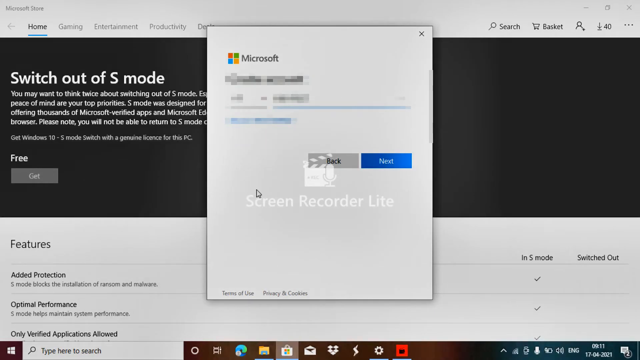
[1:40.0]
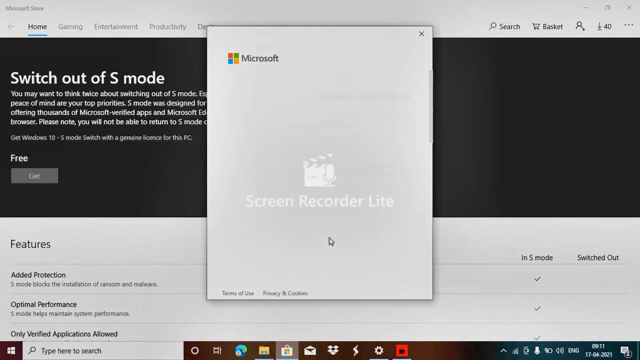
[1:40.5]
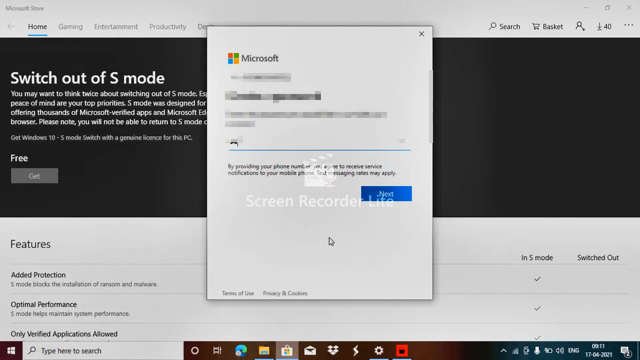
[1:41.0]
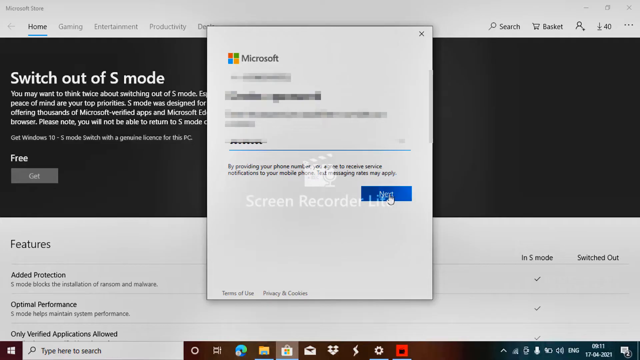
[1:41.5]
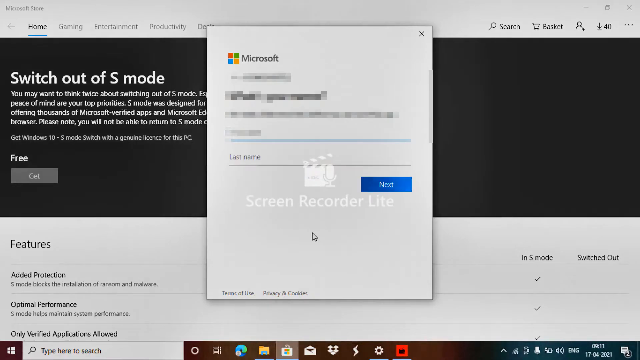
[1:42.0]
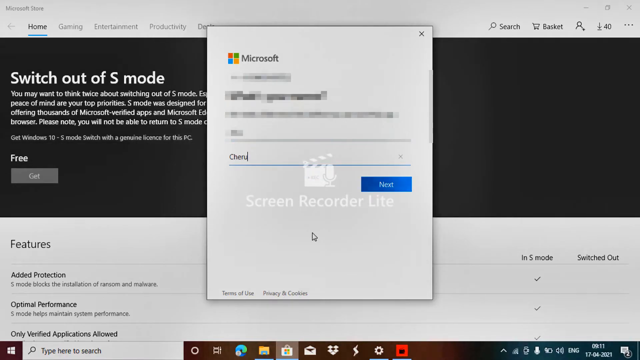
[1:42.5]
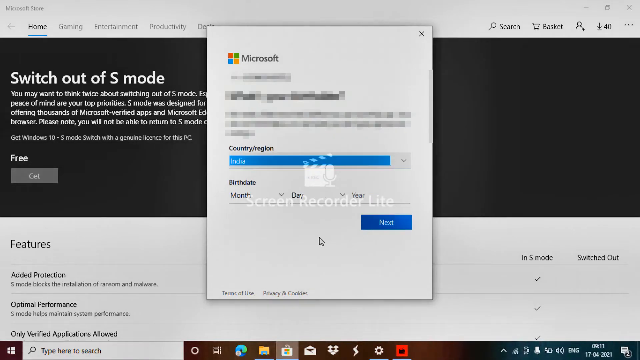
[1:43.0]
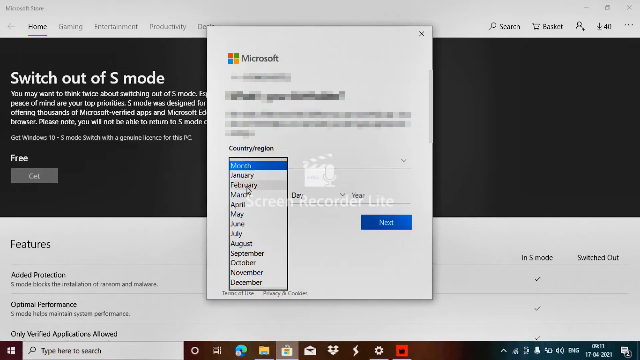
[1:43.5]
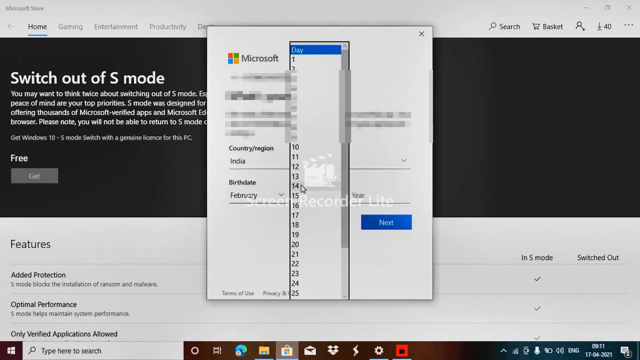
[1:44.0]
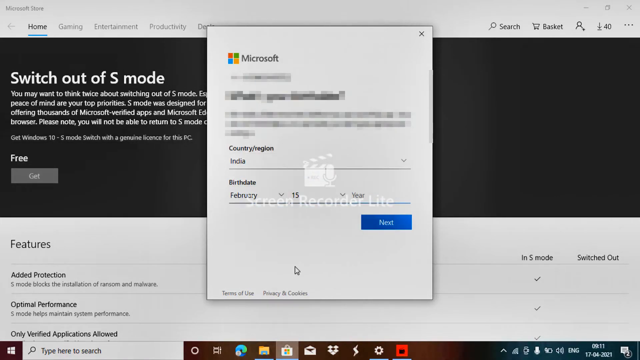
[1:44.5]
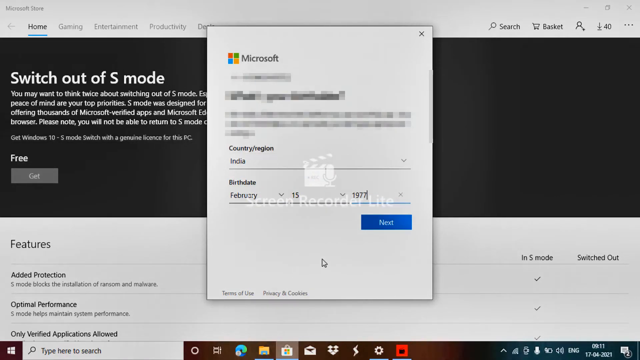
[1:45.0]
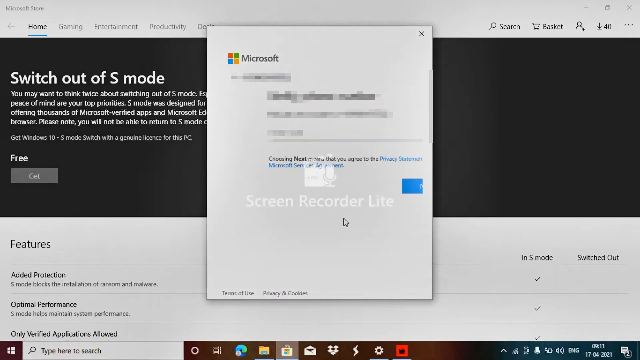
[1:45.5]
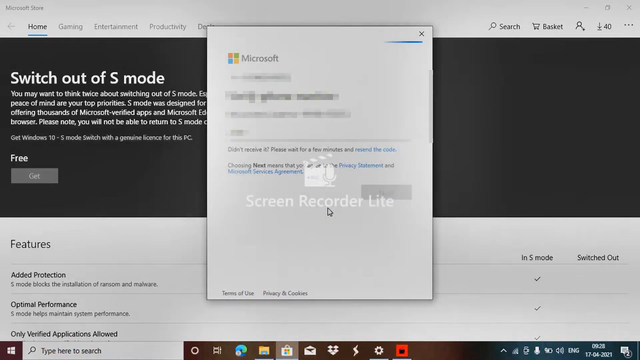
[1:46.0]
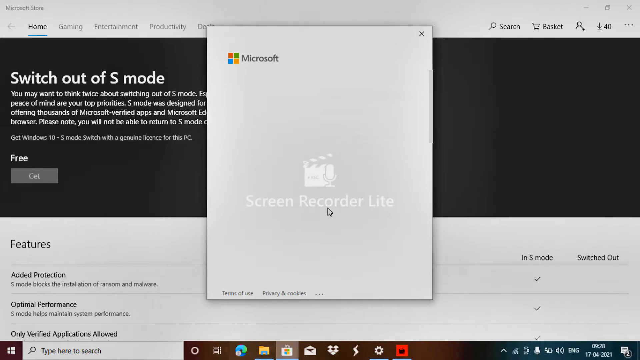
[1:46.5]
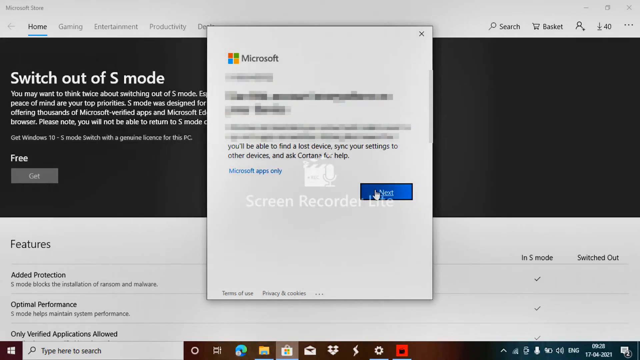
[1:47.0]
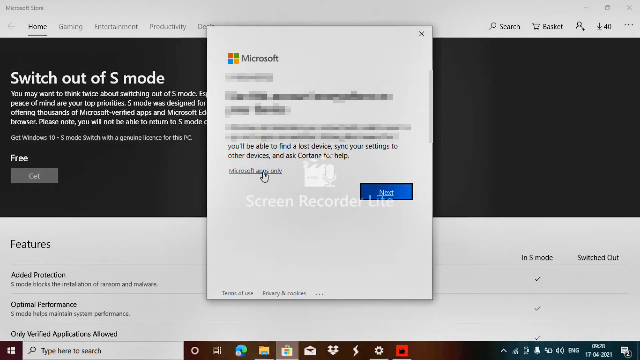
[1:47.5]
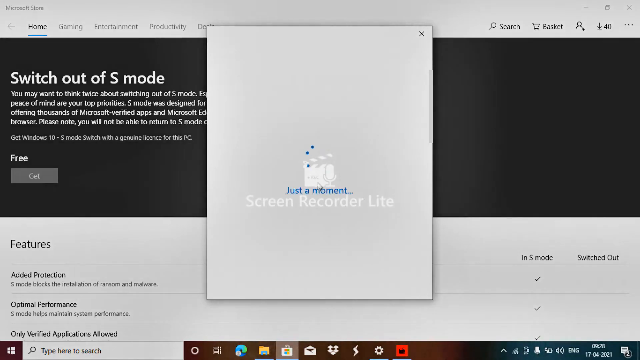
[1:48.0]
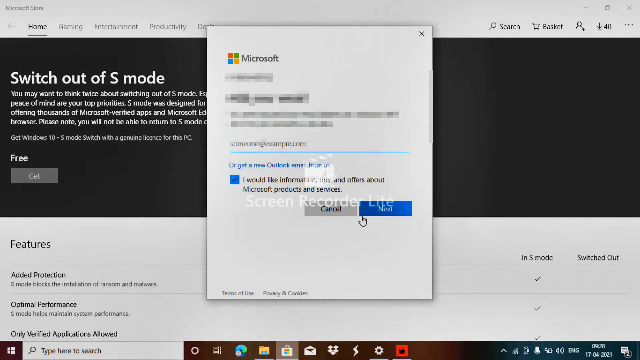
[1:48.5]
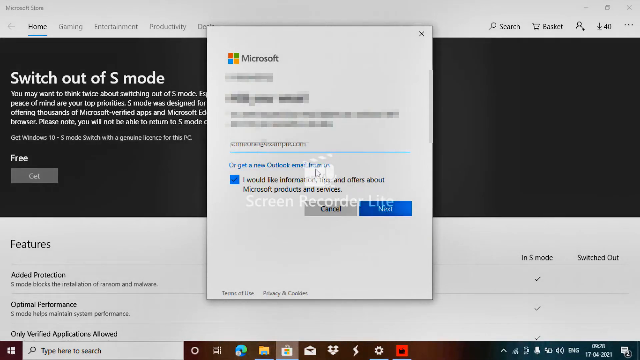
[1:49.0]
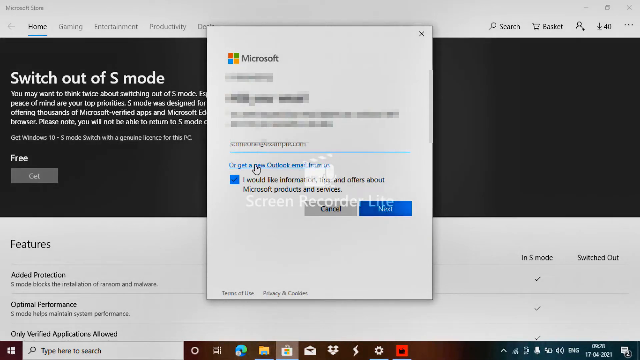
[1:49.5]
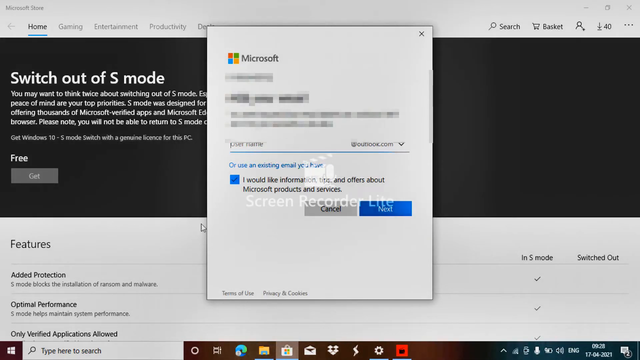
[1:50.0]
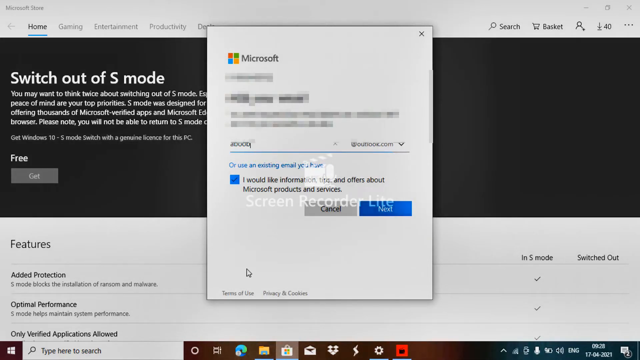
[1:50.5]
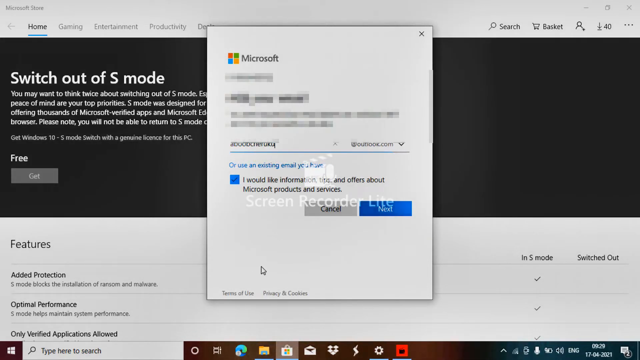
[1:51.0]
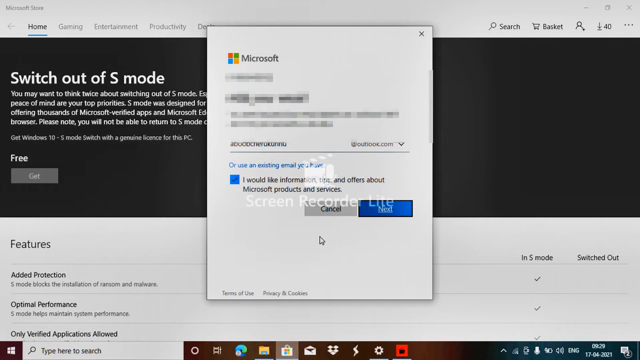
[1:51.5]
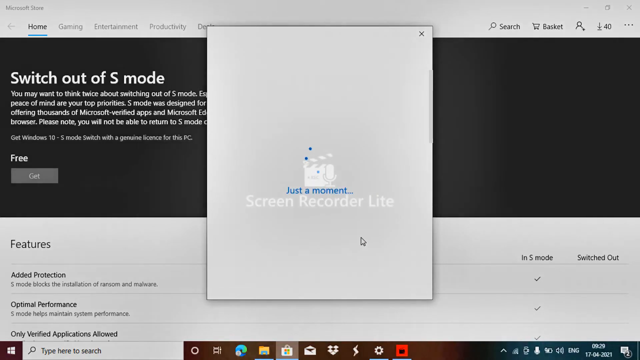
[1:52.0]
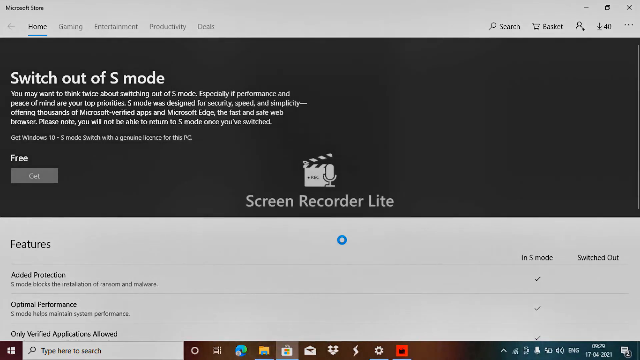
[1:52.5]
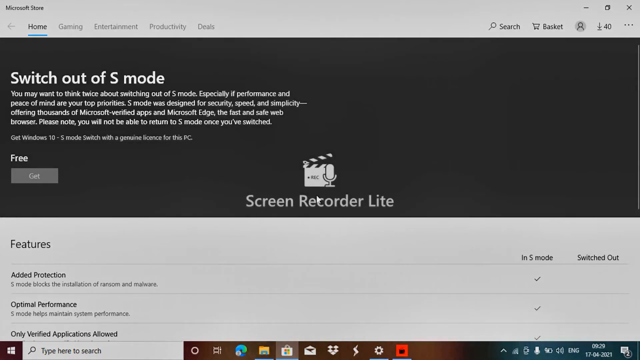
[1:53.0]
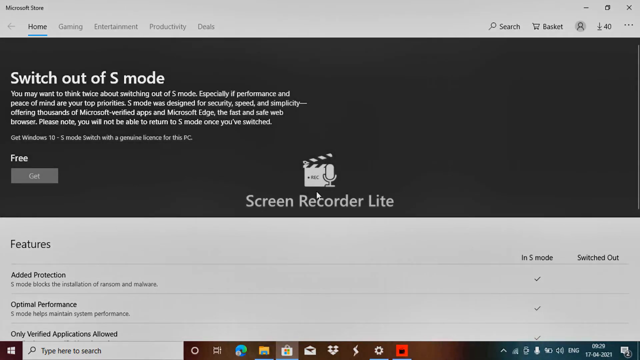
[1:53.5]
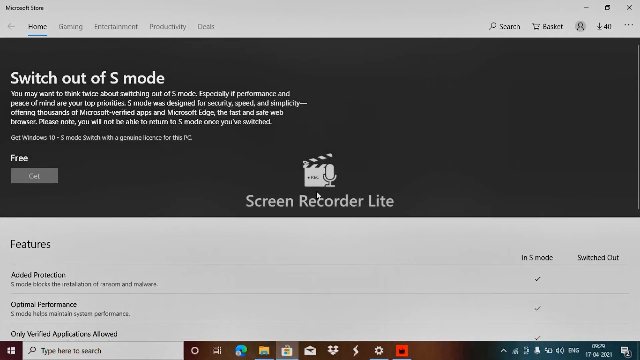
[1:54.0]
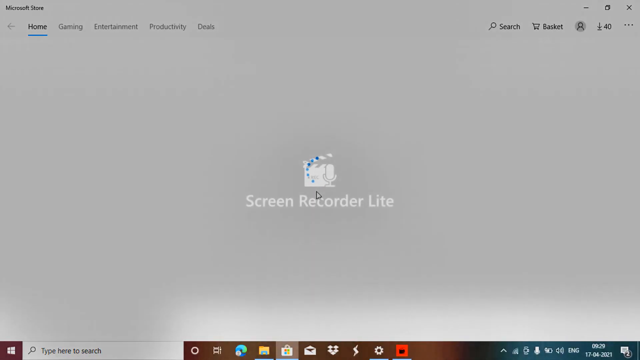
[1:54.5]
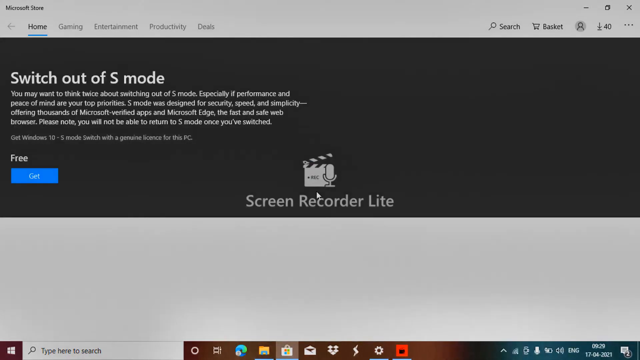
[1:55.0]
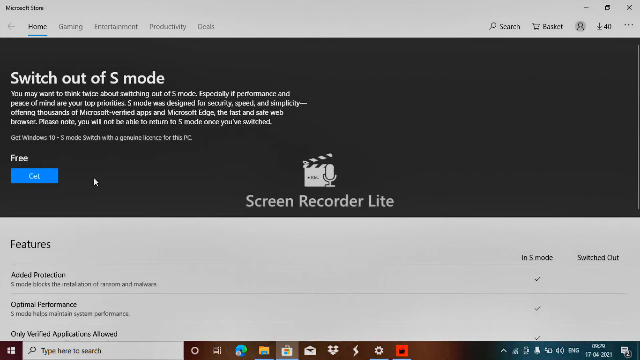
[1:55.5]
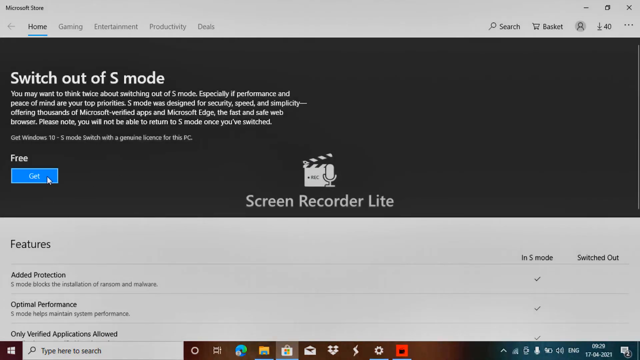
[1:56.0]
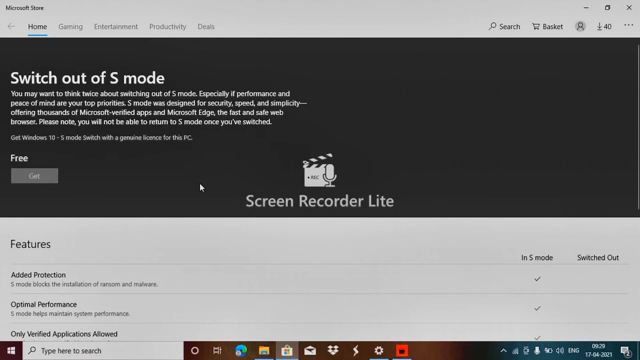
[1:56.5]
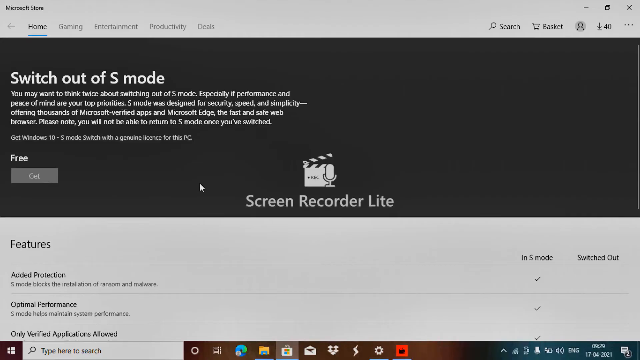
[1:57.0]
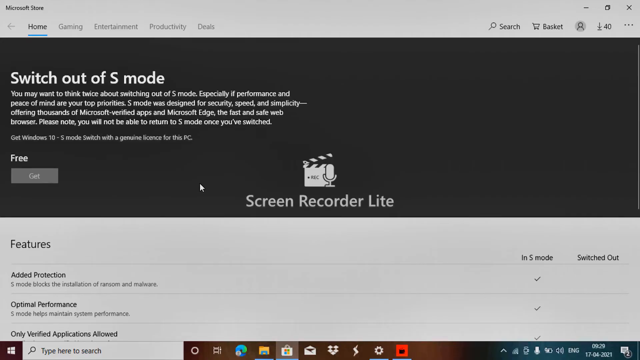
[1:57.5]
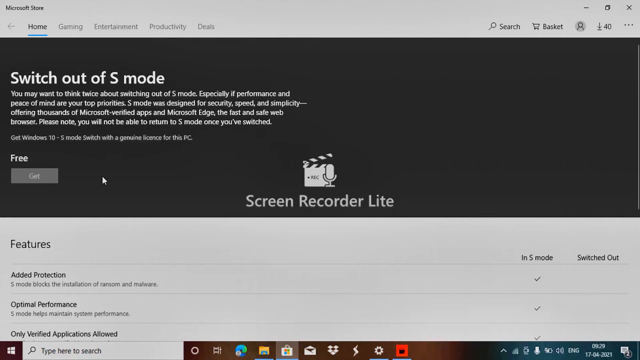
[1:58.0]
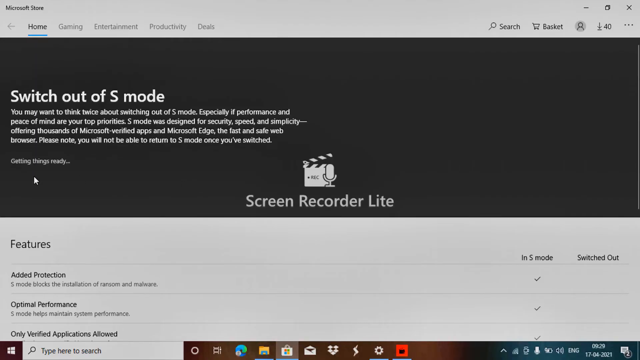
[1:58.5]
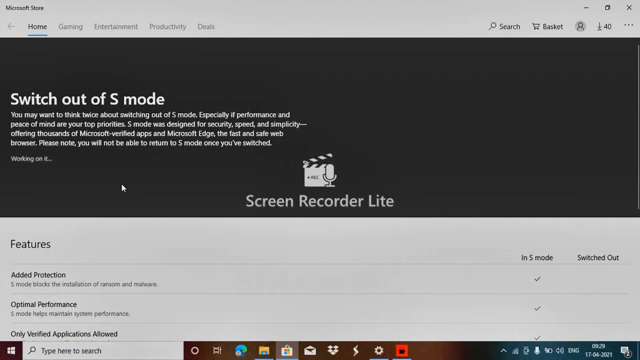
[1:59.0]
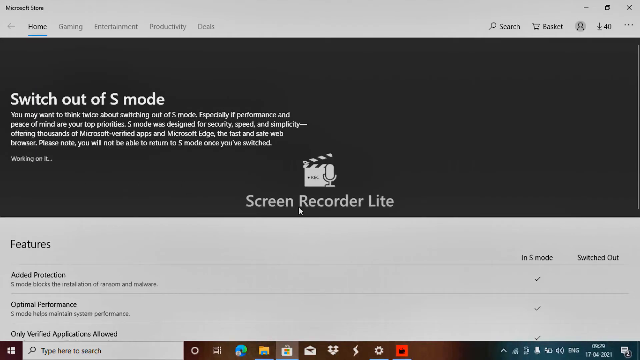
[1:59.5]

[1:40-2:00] After submitting the blurred-out credentials, the person fills in a birthday and a country and clicks next through several steps, such as choosing an existing email, including clicking to use an existing Outlook email. A watermark reading "screen recorder light" is visible. The process loads, they click to get the app, and it loads again. The Microsoft sign-in pop-up is small and centered on the screen, with a white background, the Microsoft text and logo at the top left, "sign in" in bold letters, a blank field for an email, phone or Skype, and text that says "no account create one"; the person apparently created a new account.